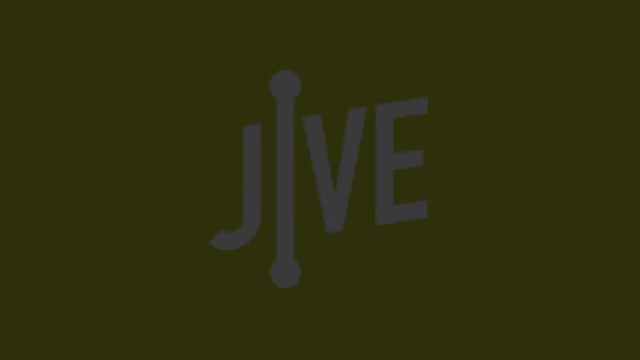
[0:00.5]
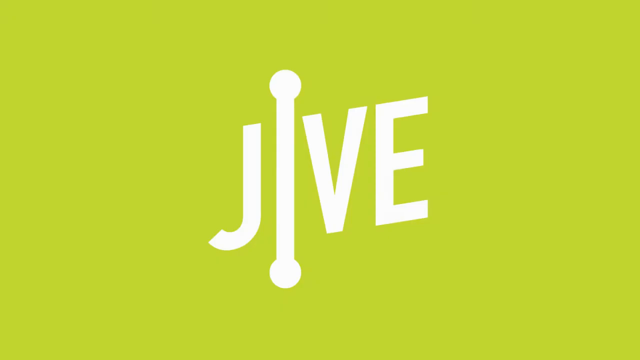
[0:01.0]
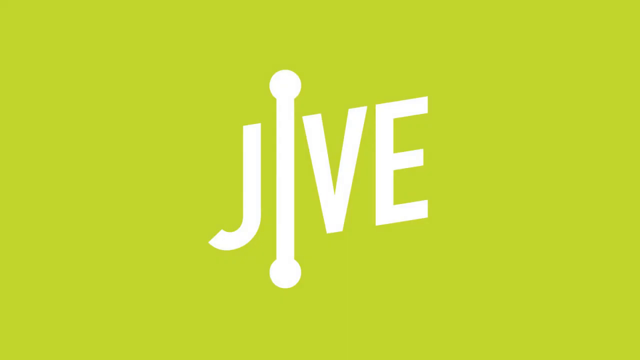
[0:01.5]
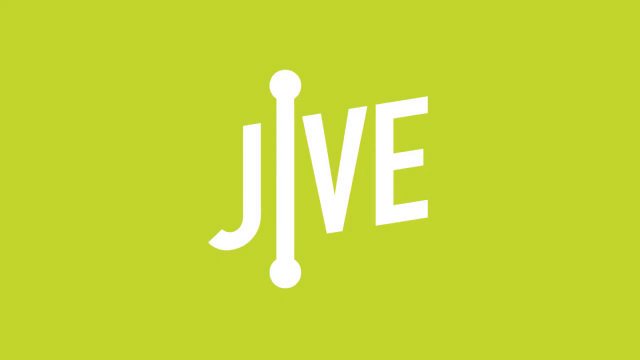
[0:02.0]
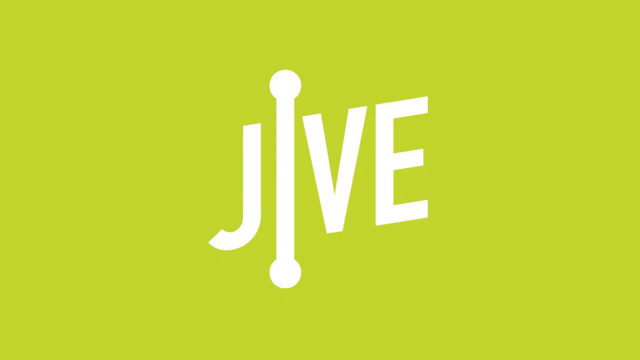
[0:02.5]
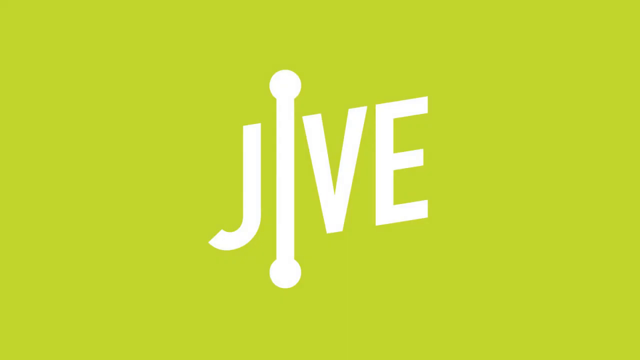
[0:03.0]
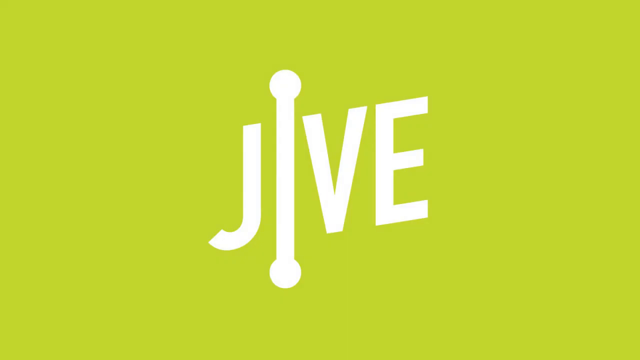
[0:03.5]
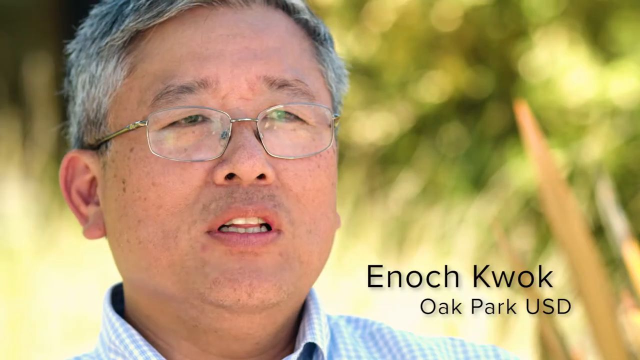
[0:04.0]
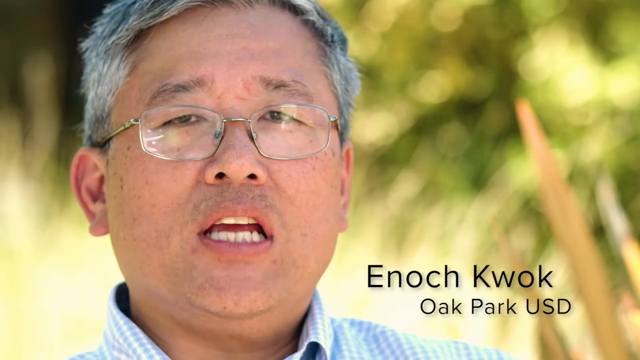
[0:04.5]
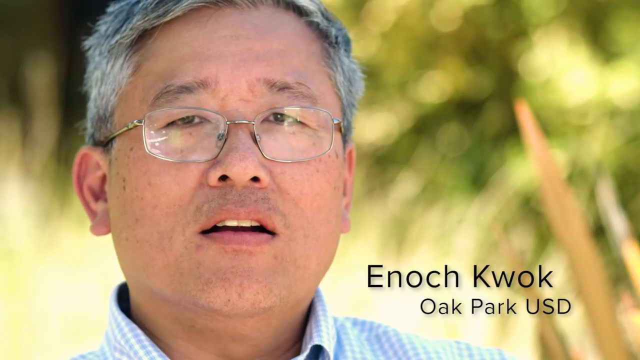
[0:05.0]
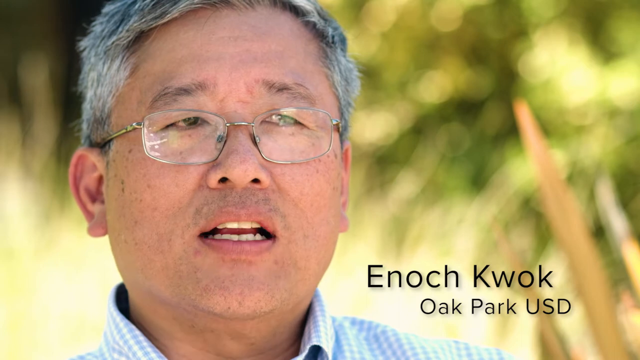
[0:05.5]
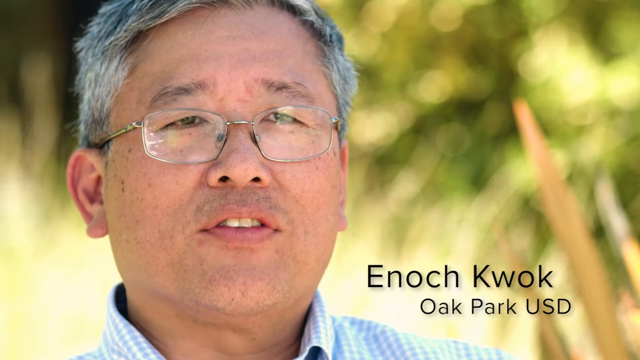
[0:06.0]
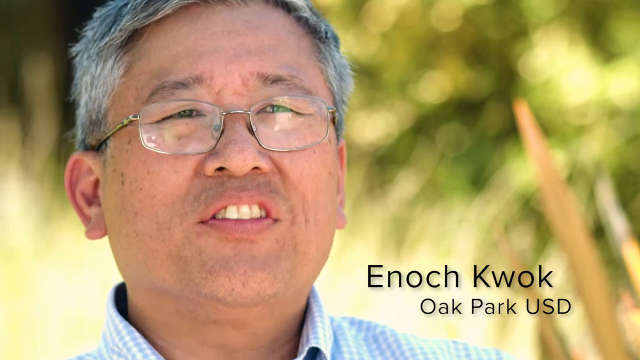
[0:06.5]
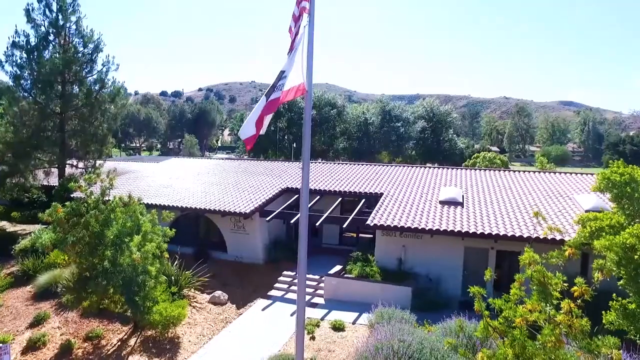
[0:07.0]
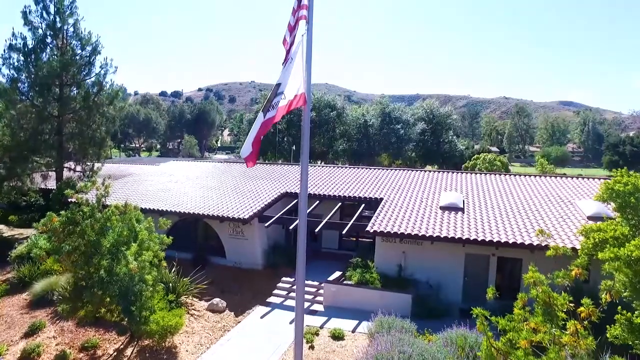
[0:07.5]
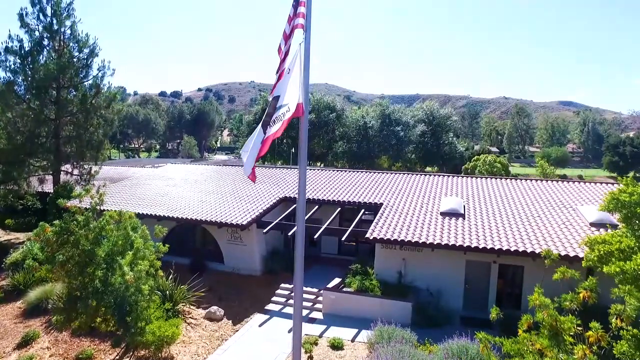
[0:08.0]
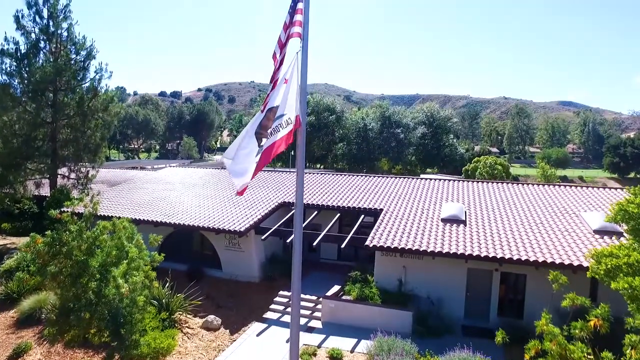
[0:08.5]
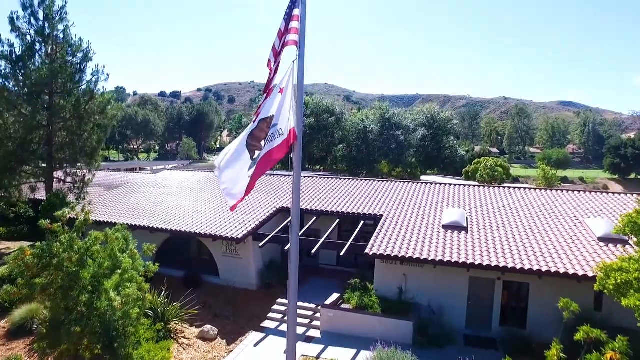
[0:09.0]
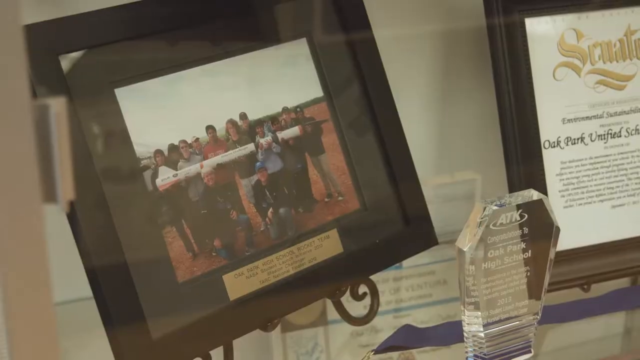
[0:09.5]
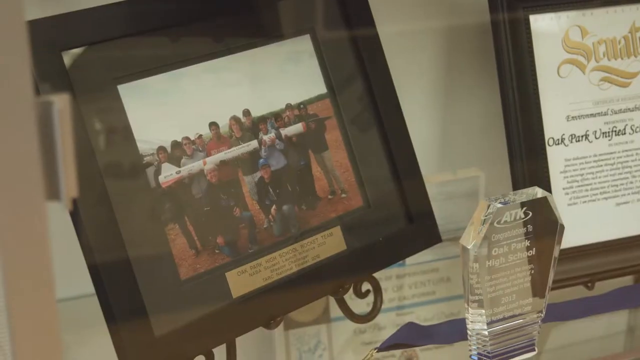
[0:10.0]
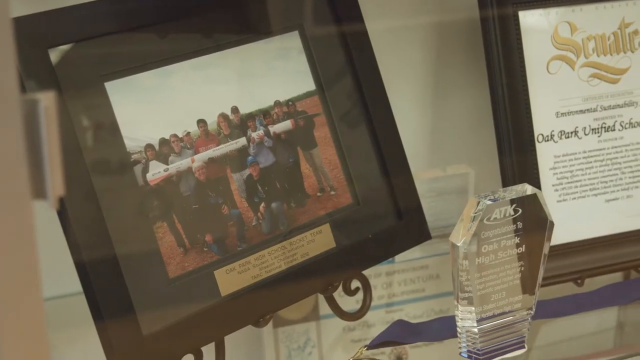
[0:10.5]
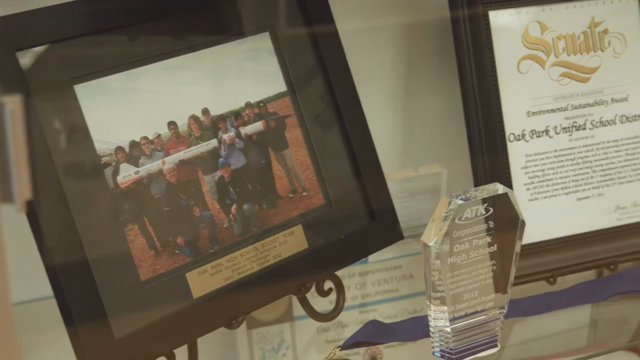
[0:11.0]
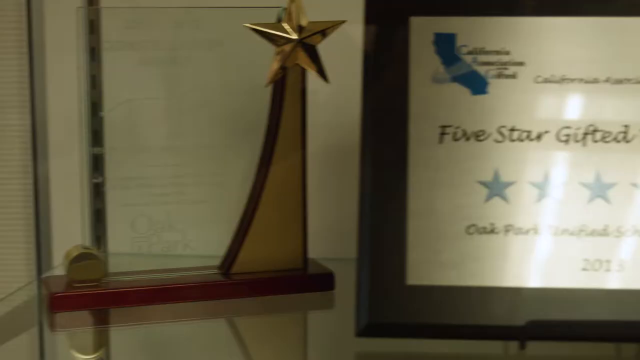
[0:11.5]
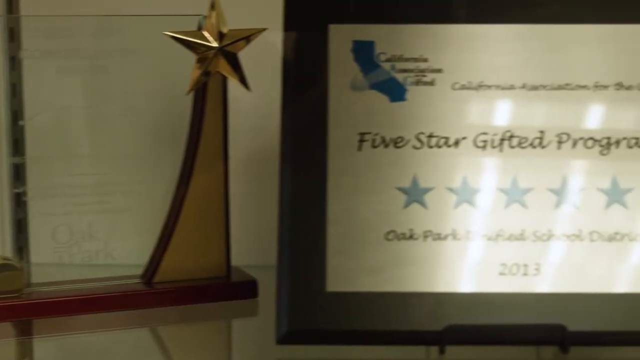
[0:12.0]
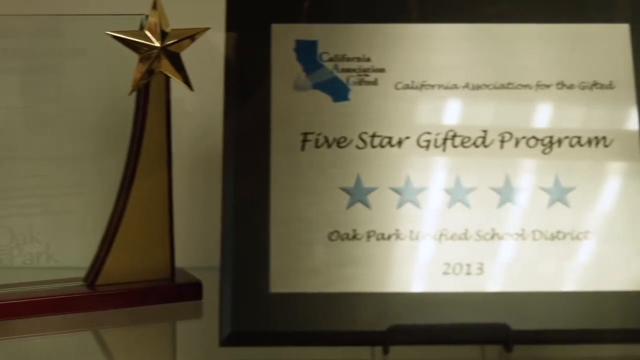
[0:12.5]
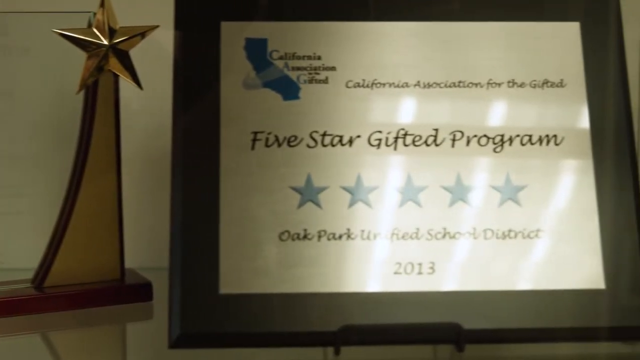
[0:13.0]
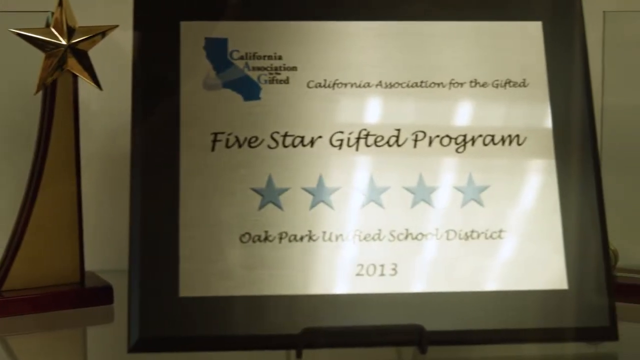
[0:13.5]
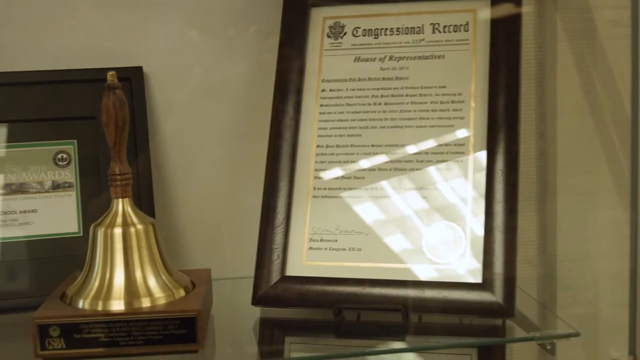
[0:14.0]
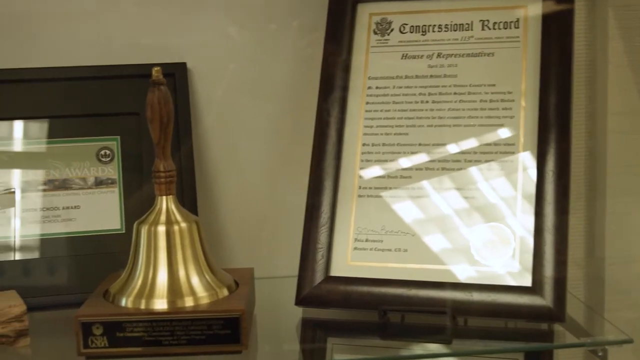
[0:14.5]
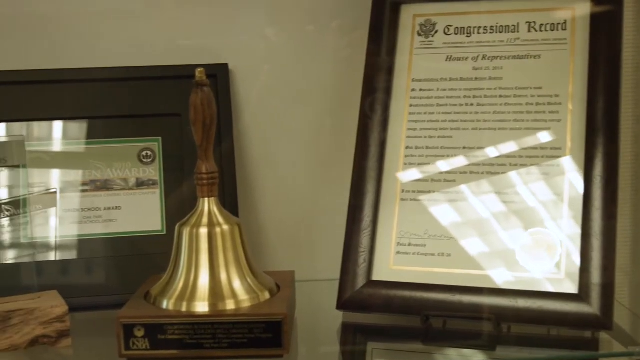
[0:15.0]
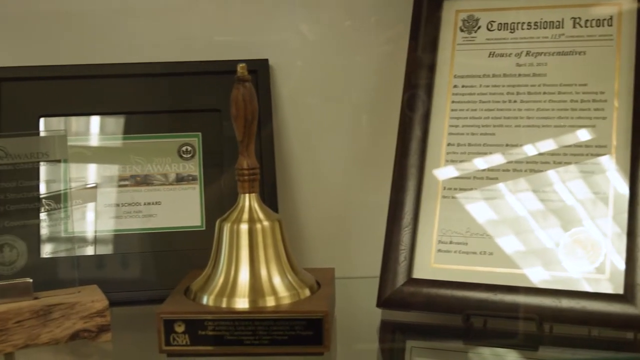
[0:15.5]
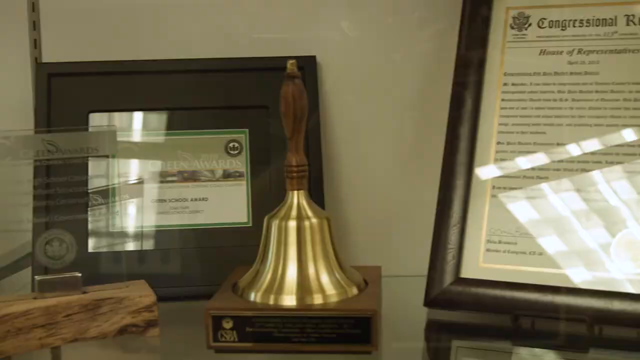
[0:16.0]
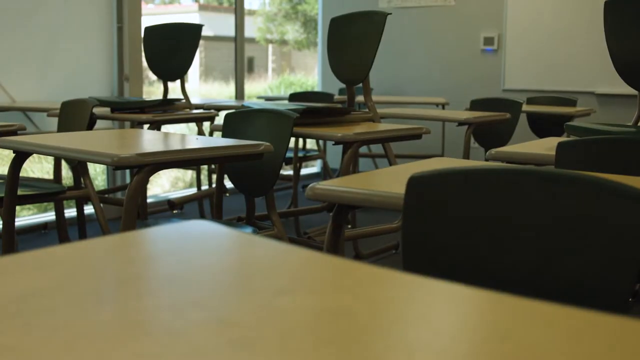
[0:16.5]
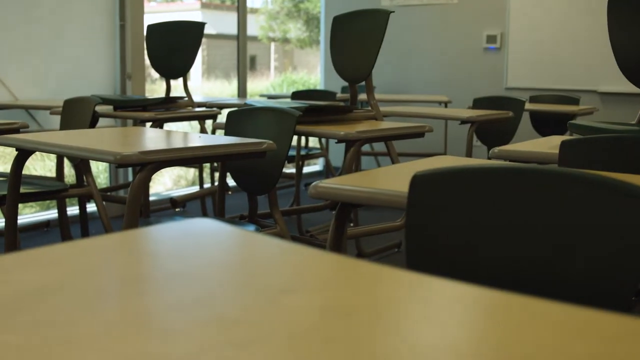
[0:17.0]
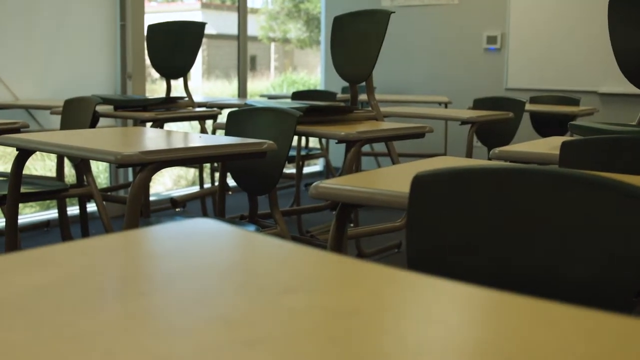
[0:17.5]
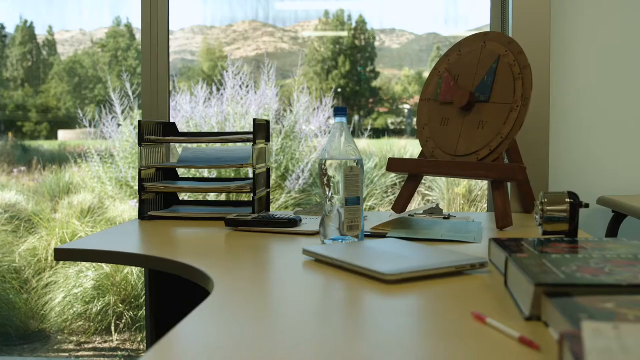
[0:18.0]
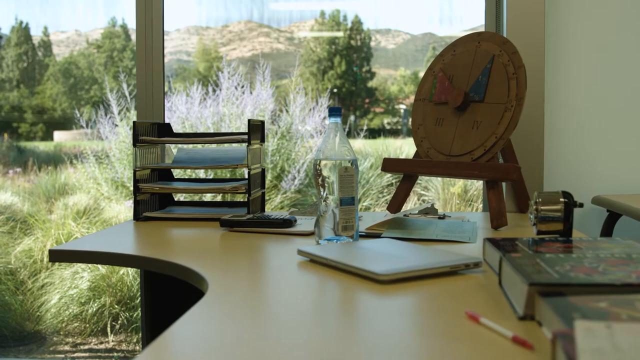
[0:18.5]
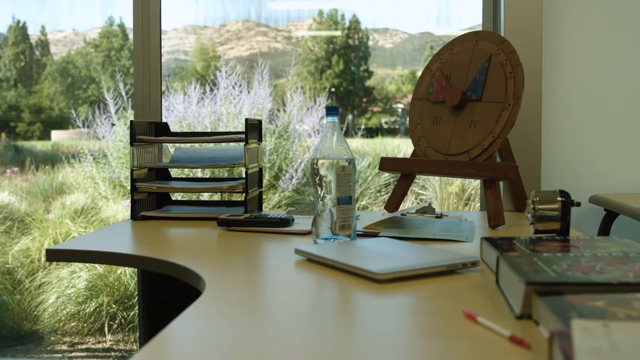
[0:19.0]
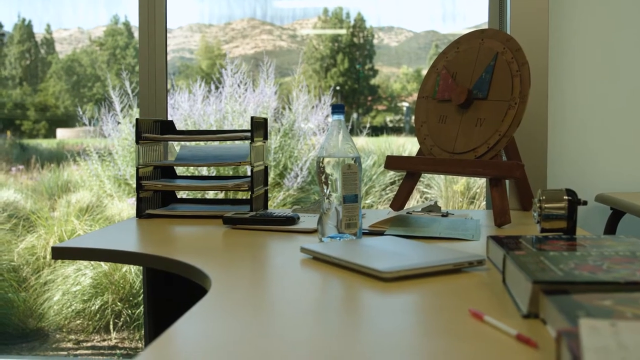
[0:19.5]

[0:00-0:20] The word "Jive" appears on screen in large white letters on a sort of lime green background. A man then talks to the camera; he is maybe in his 40s or 50s, with grey hair, glasses and an Asian appearance. Text appears on the right of the screen reading "Enoch Kwok, Oak Park, USD". He talks to the camera and his eyes move a little. Next comes a view of what looks almost like a national park, with a California flag in front of a building and trees and hills behind it. Inside the building there are framed pictures and awards, even a bell and sort of a plaque given as a prize. There are some empty chairs, like a school classroom. A window is shown, or some ornaments, along with a plastic water bottle. The outdoors is visible through the windows: a bush right next to the window, drier hills beyond, and between the bush and the hills a number of trees that look like pine trees, one on the right of the screen and a whole bunch of them on the left.